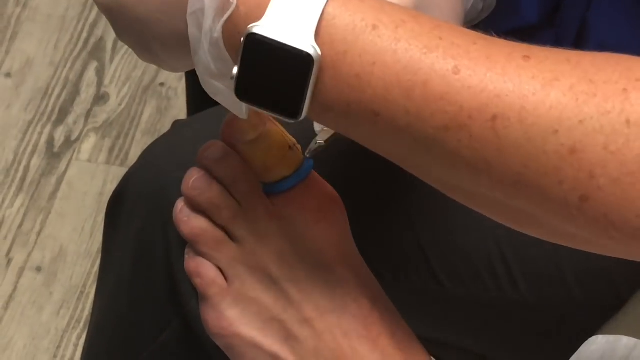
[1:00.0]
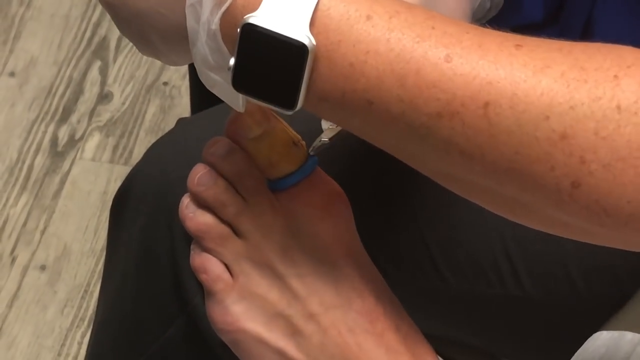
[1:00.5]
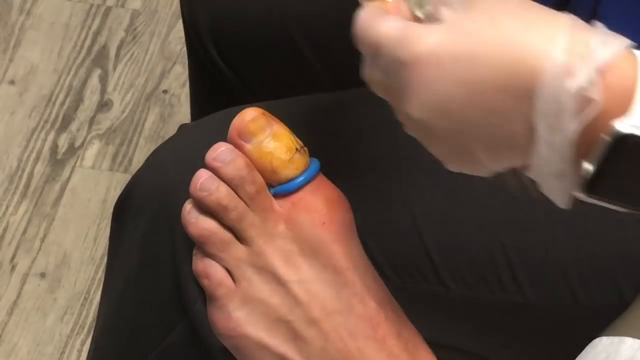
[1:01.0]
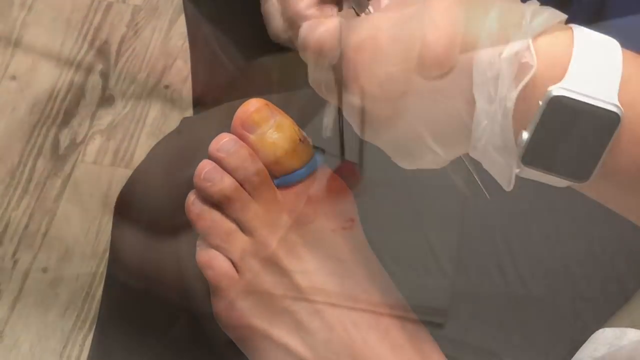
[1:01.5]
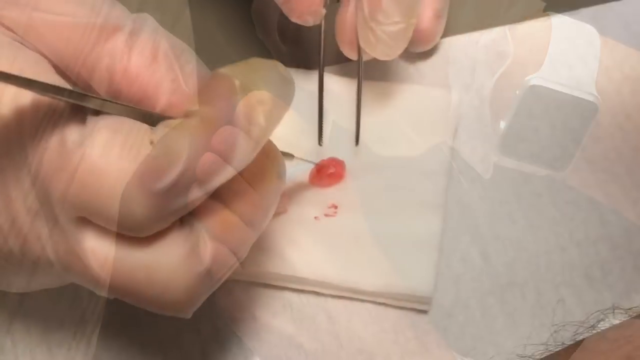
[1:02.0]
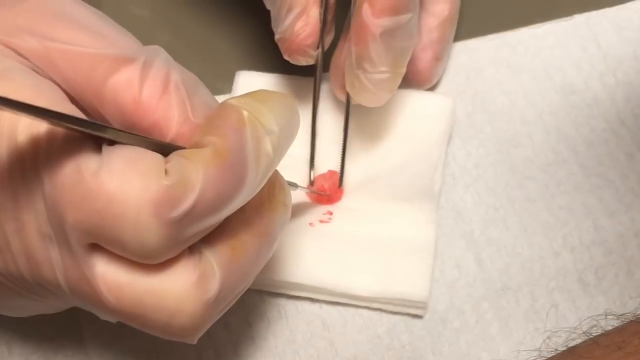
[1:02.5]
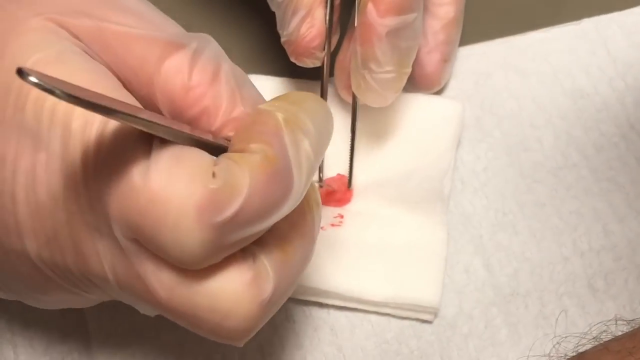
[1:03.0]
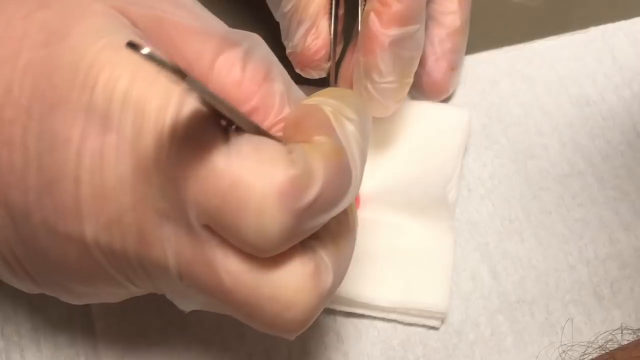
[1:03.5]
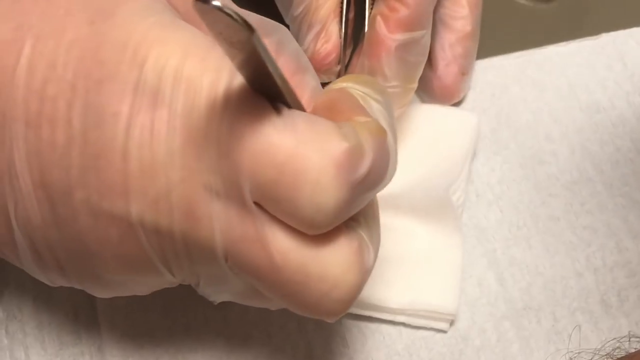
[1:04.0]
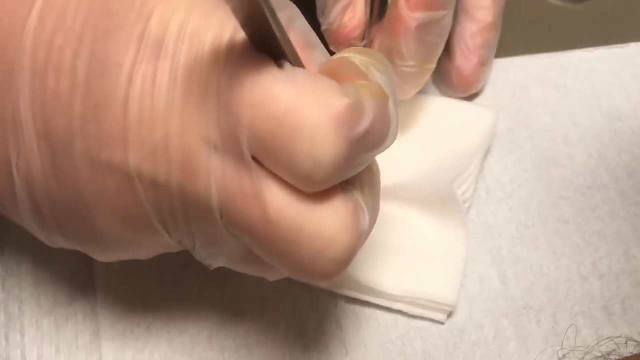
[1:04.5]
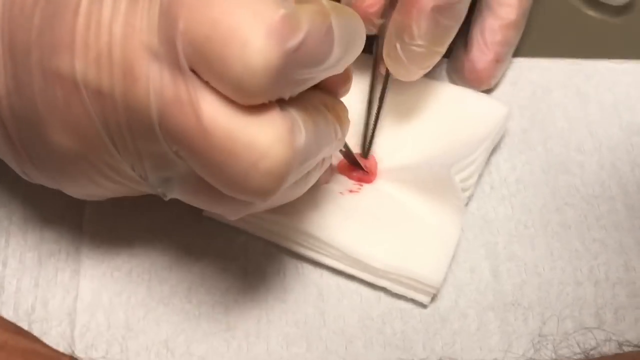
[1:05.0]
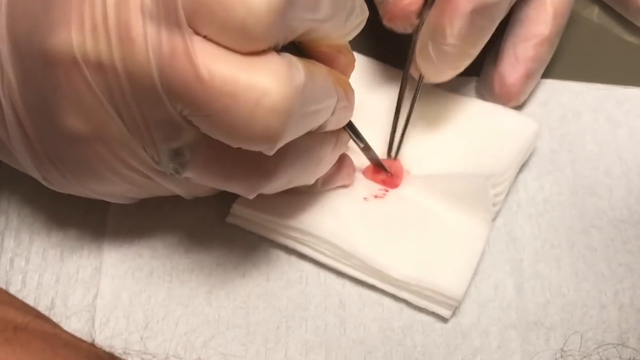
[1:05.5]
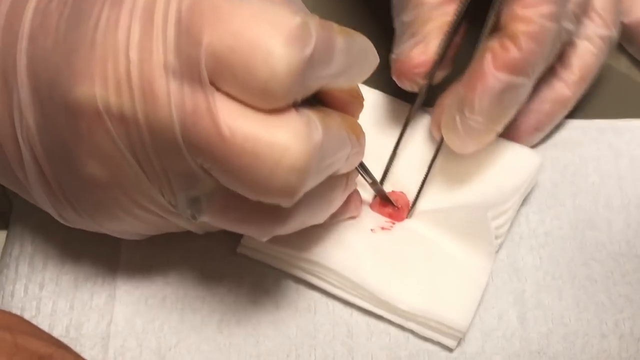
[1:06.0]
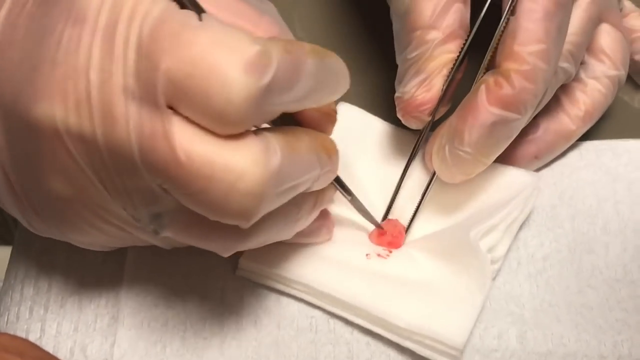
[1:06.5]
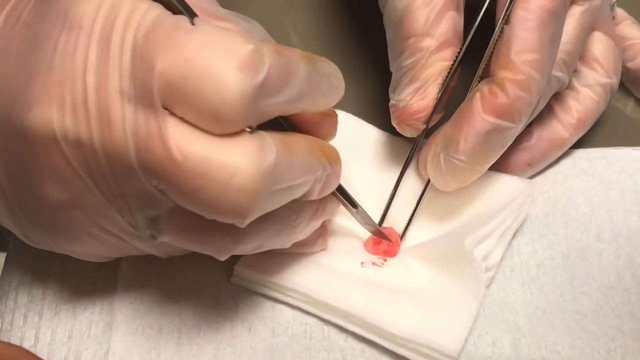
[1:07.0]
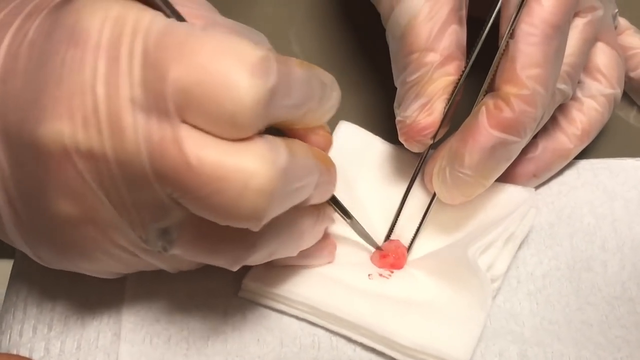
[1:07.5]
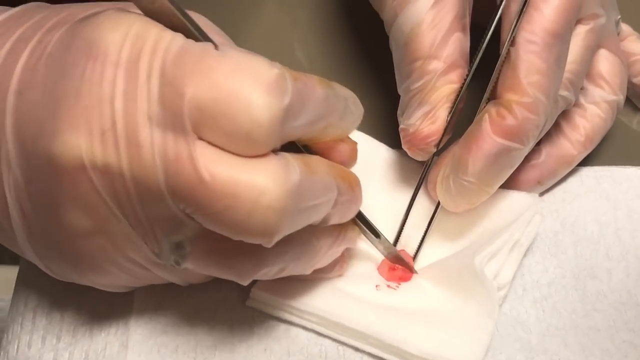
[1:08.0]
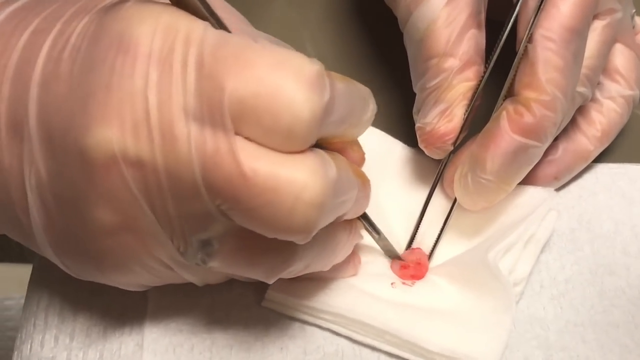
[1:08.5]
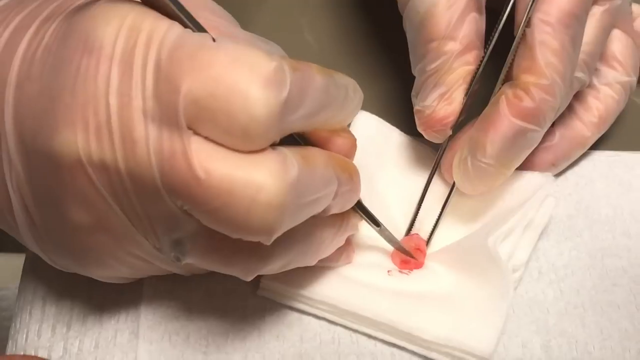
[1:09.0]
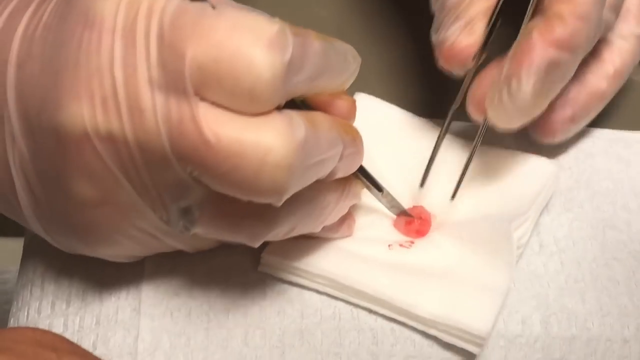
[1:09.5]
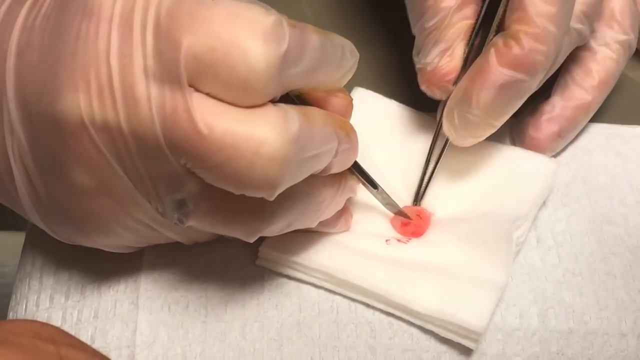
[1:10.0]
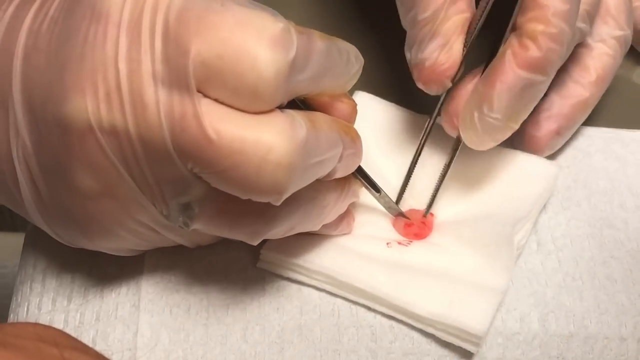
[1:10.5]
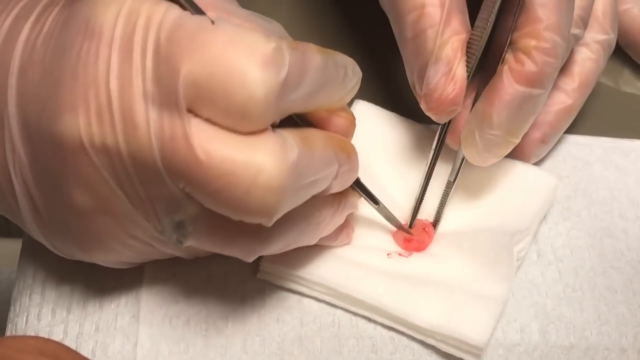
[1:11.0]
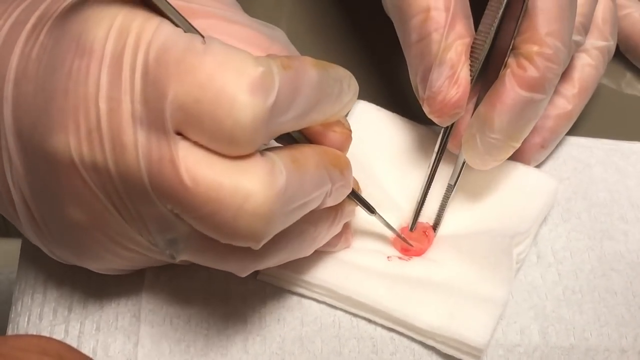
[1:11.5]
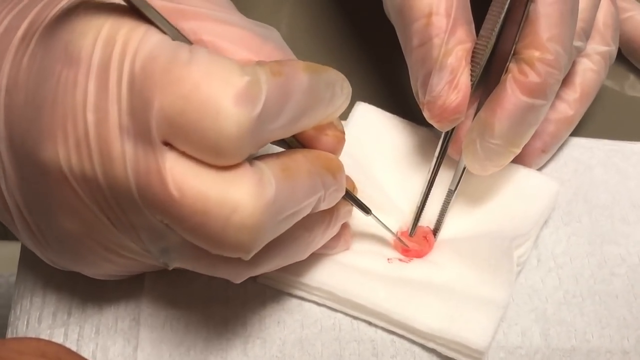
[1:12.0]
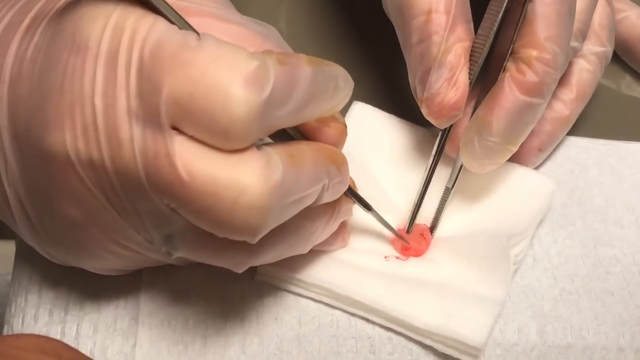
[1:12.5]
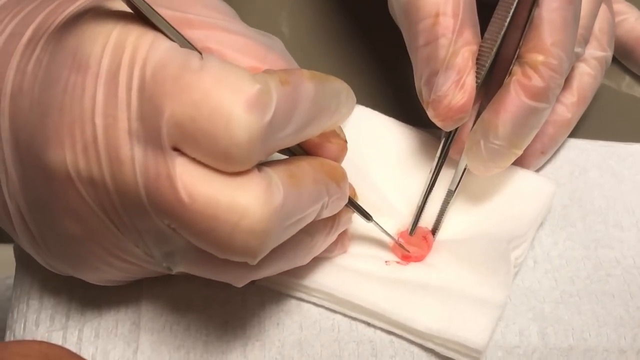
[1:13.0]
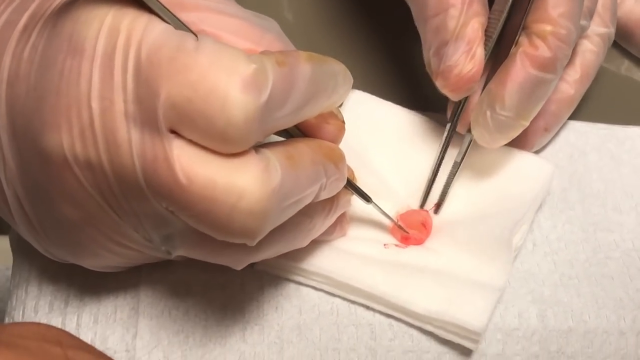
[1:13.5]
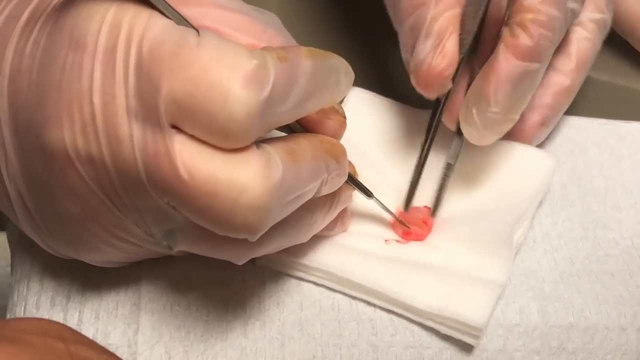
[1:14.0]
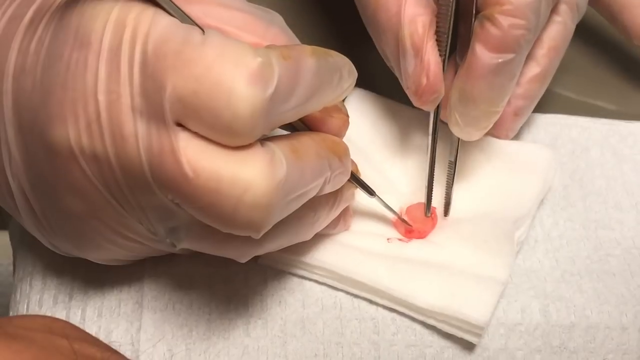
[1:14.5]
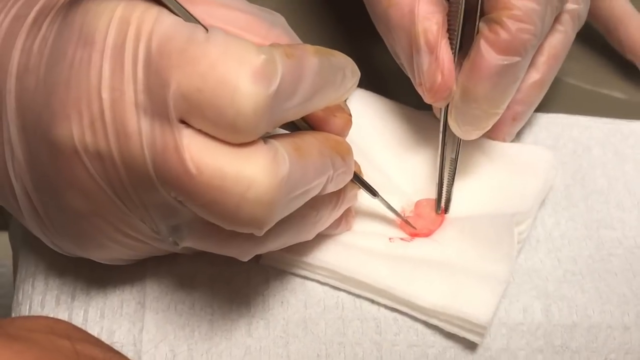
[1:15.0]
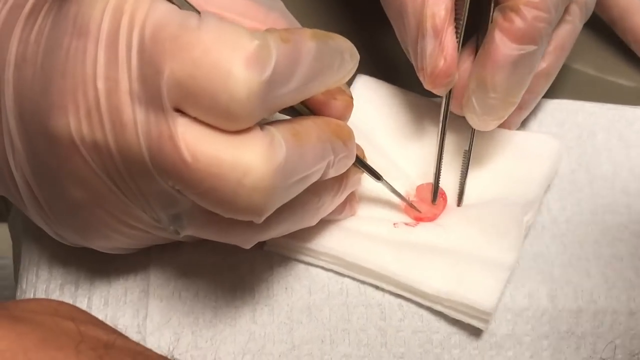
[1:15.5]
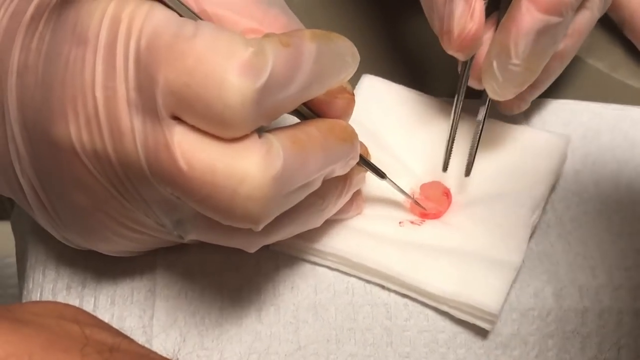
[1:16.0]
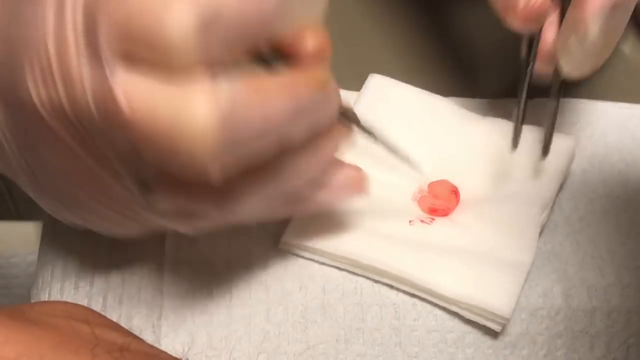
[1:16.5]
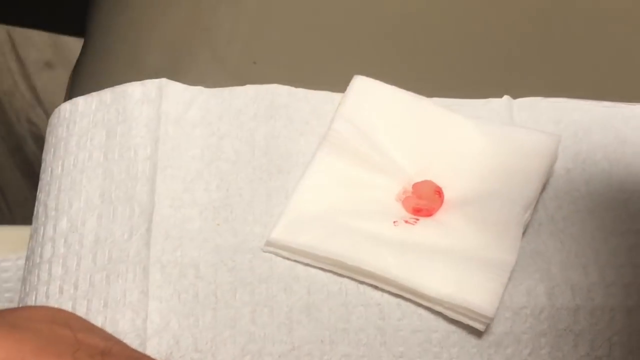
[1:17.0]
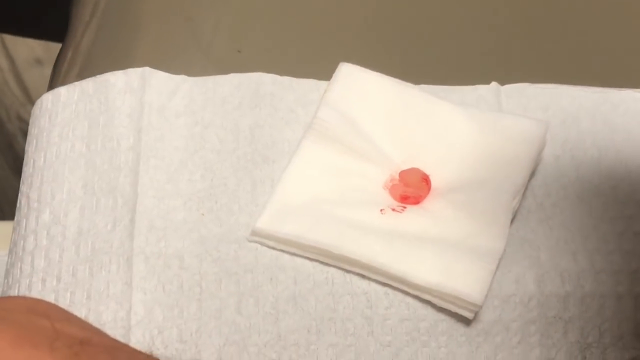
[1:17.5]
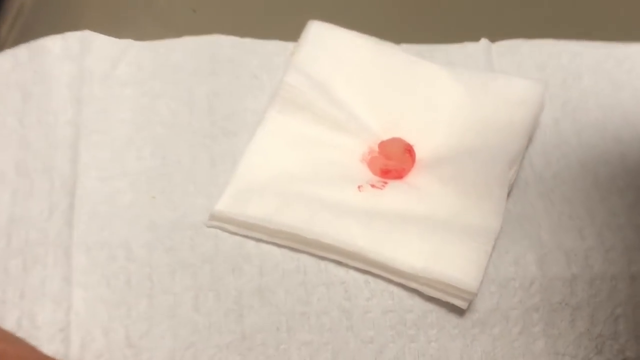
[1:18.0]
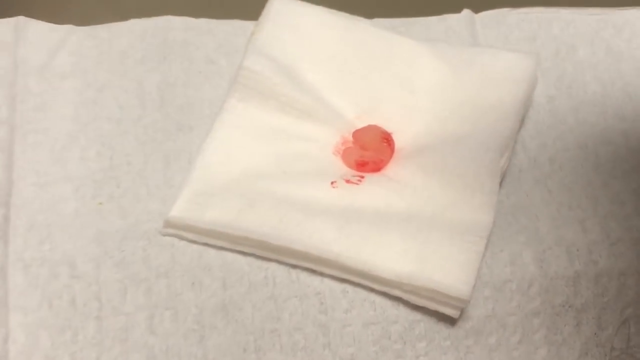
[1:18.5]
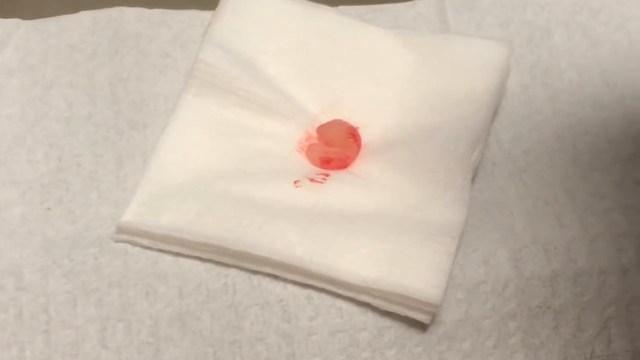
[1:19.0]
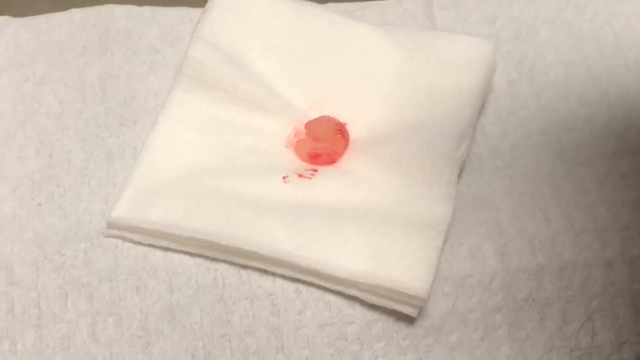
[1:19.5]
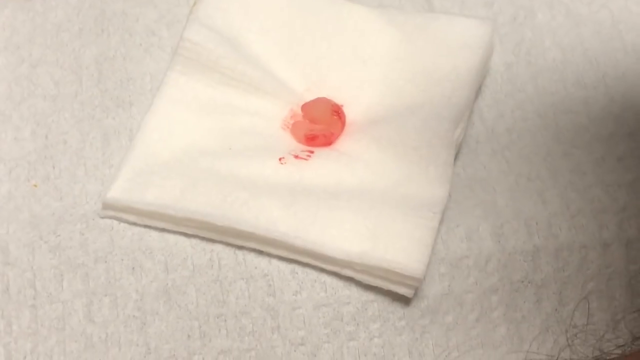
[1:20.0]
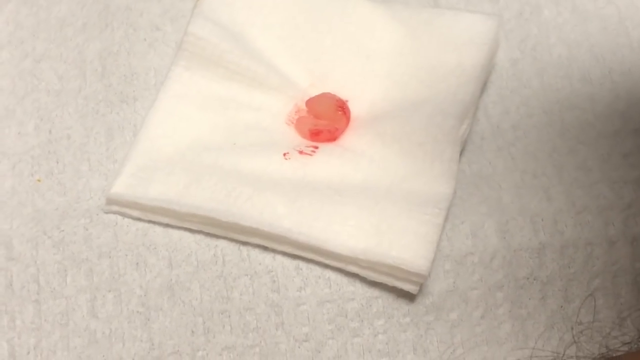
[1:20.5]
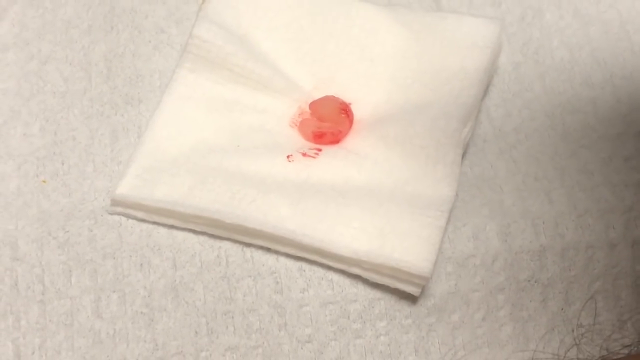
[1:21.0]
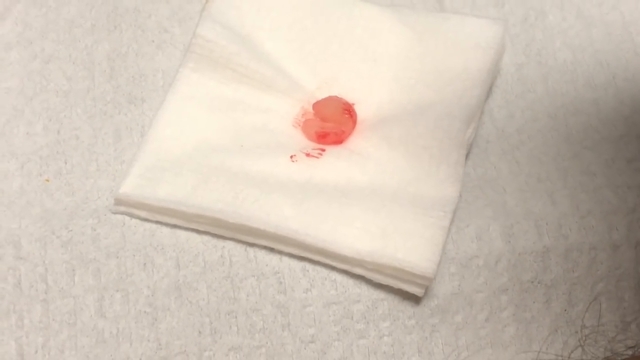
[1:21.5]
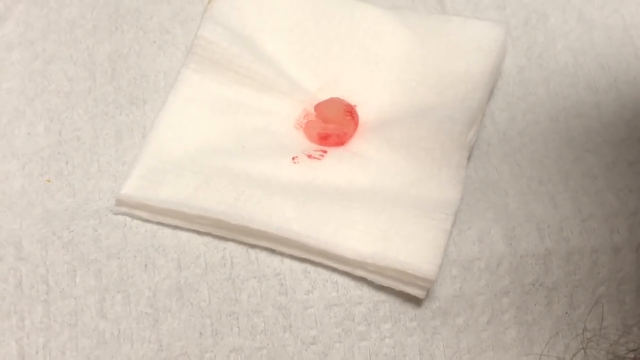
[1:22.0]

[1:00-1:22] The woman moves the round object that was taken out of the toe and puts it on a square napkin. Holding the round object in place with tweezers, she continues to cut into it with an incision-type instrument. The camera then pans in a little closer to the object, showing some blood and more of the object's texture. Several shadows are visible around the square napkin. The scene is indoors and well lit with artificial light, in a rectangular frame. No animals are present; only a person's hands are shown.